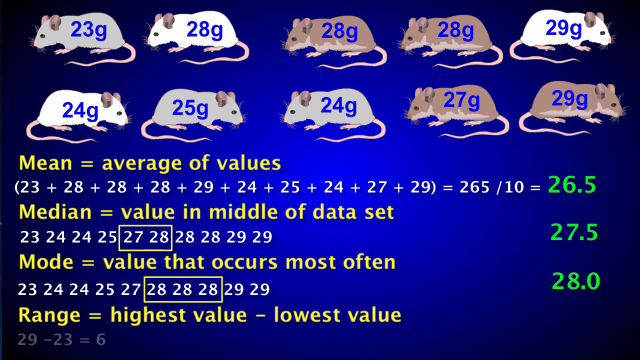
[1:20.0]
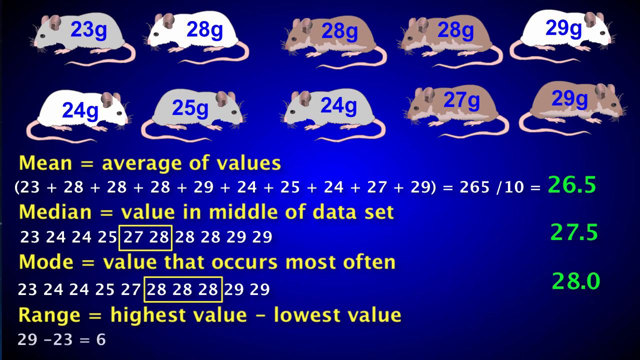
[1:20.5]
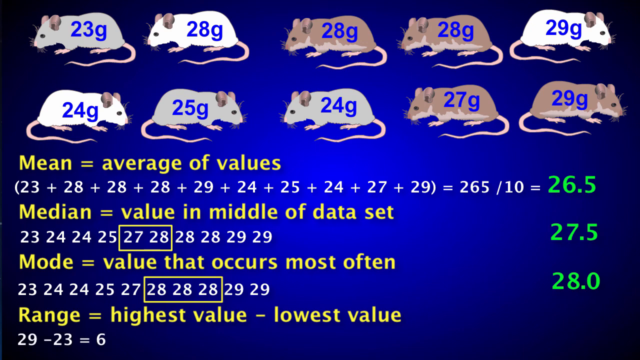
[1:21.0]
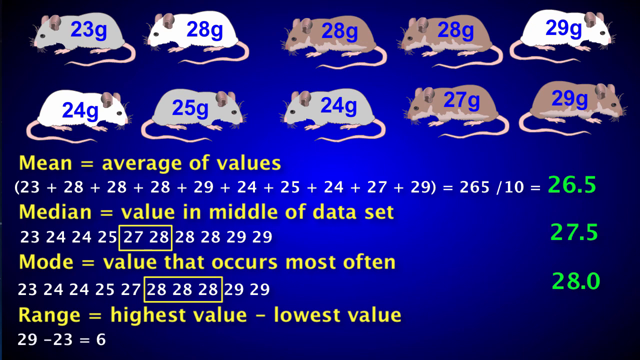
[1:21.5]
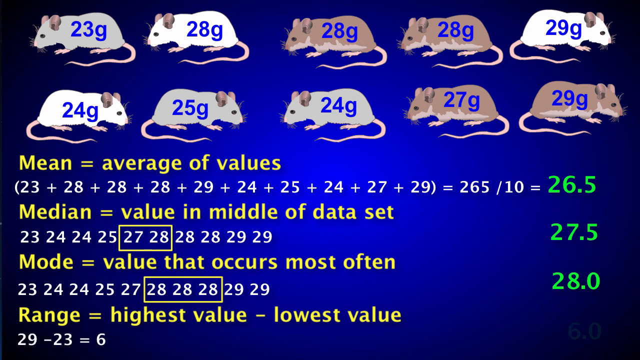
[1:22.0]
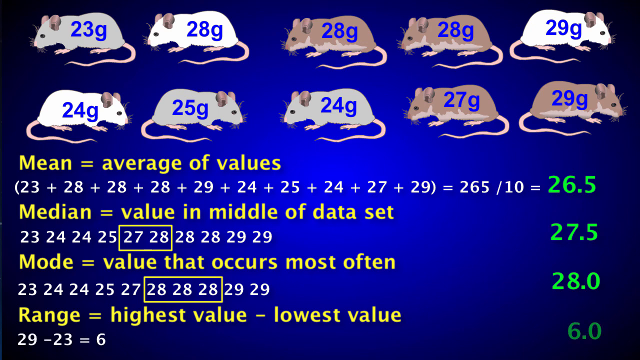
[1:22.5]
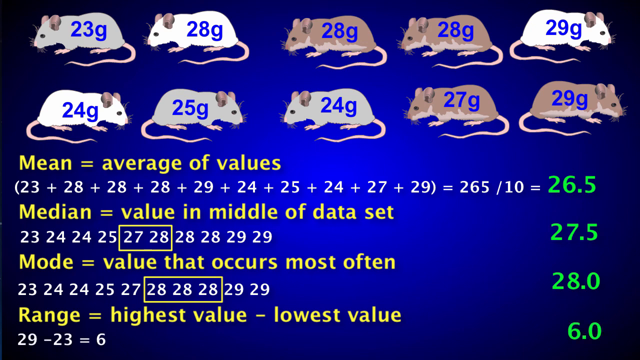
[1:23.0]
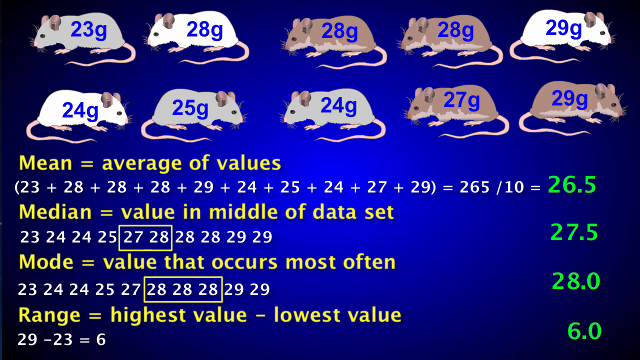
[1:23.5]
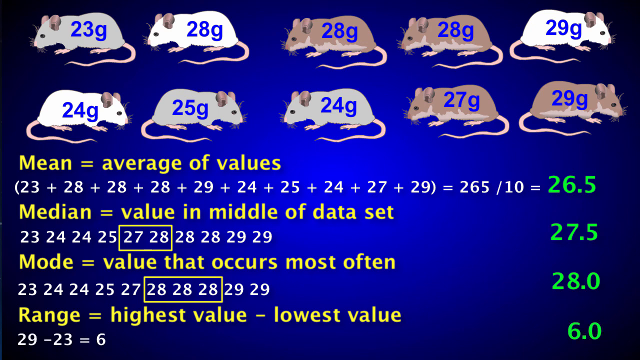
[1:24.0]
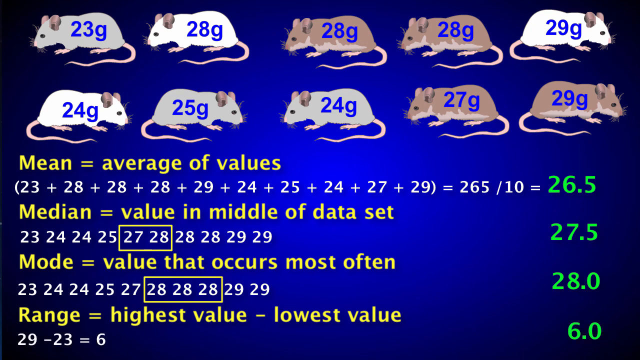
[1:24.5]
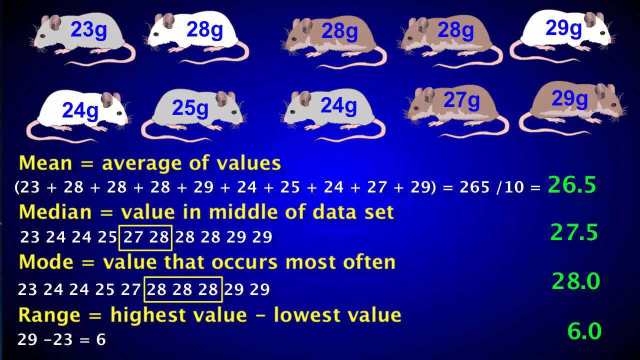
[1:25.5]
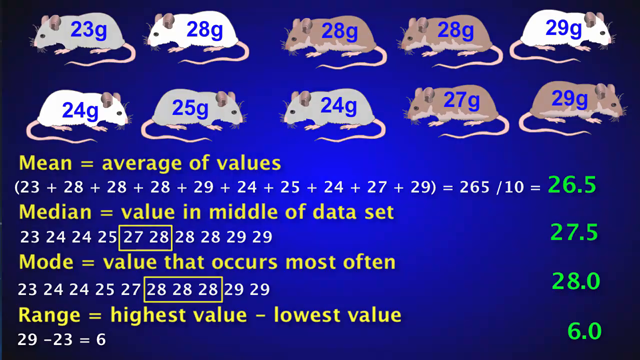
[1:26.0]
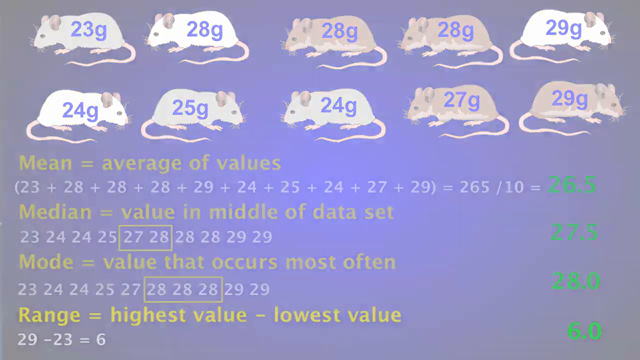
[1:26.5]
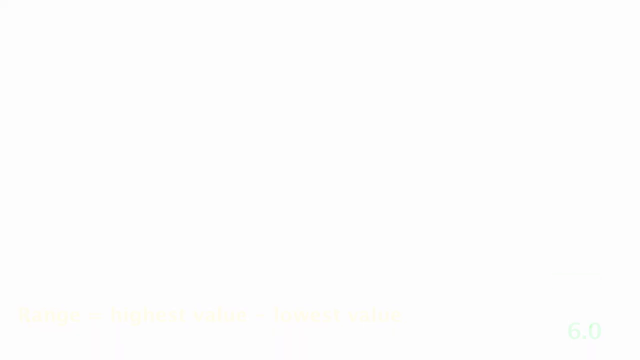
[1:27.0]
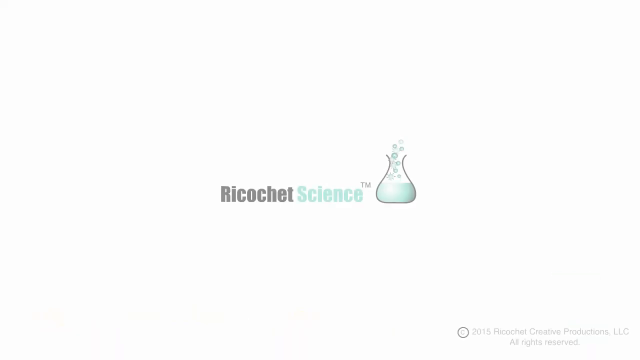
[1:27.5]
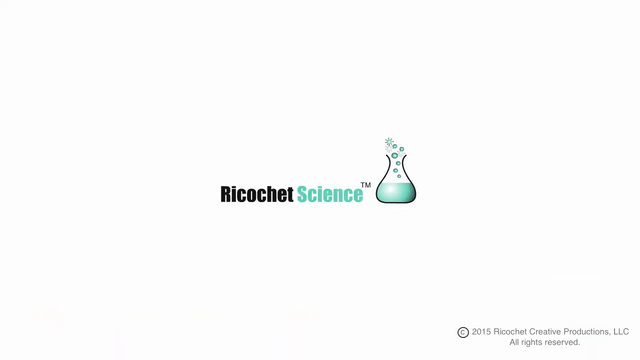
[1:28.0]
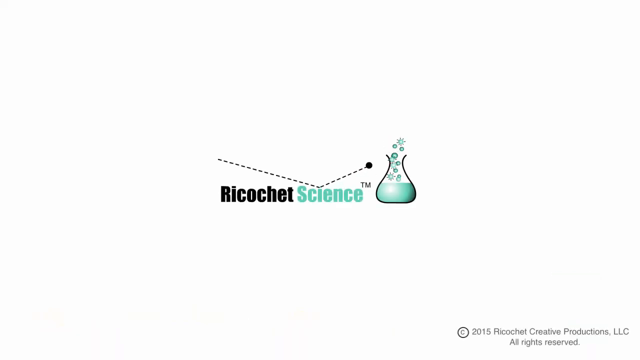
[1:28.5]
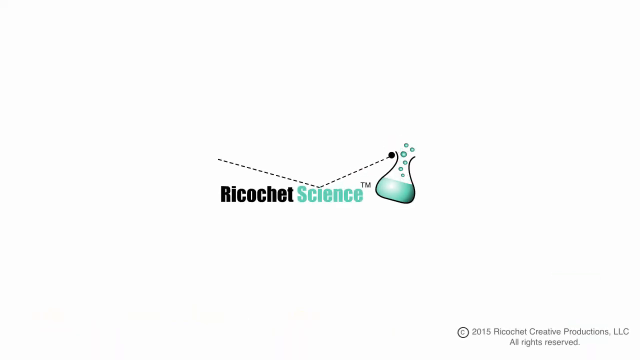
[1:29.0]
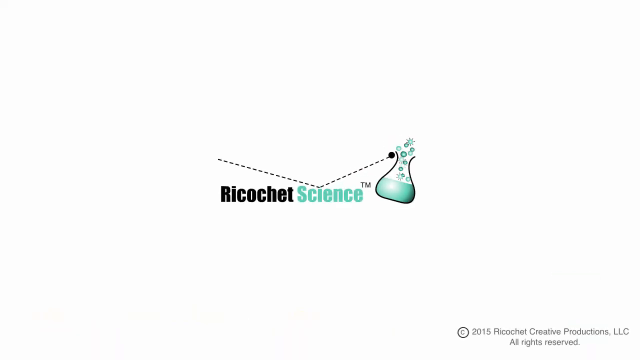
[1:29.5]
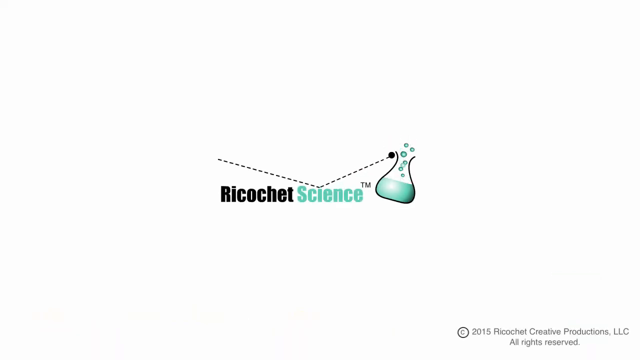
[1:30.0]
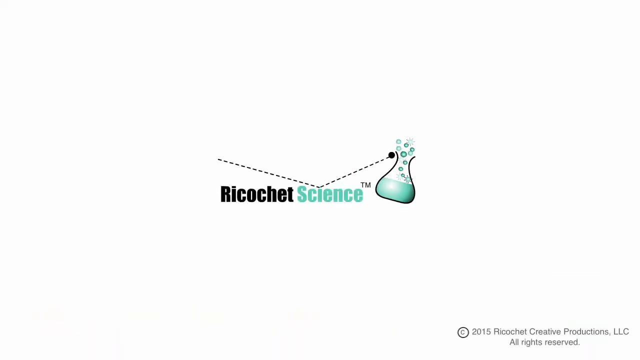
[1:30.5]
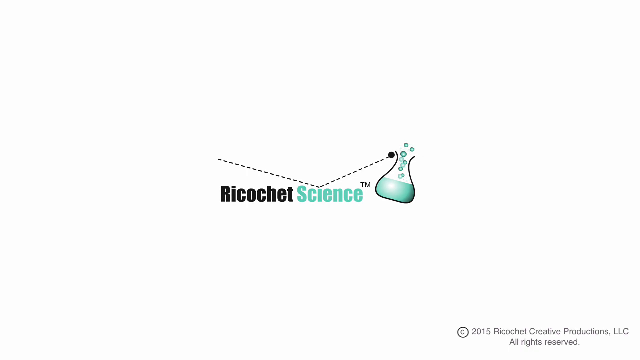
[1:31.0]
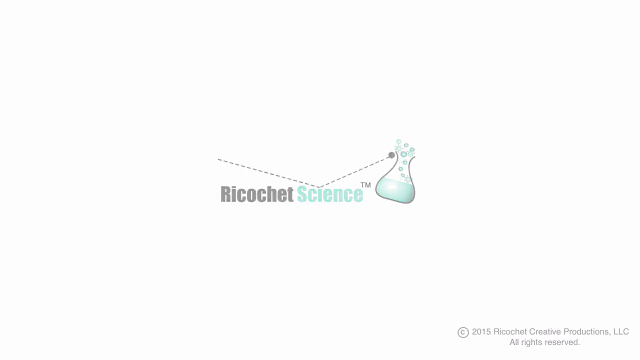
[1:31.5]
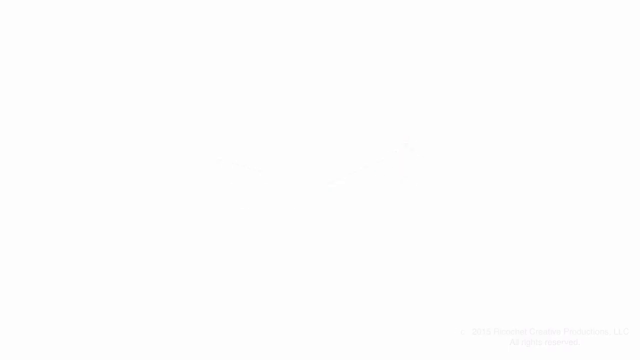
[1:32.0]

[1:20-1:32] A blue screen shows mice at the top with different gram values. The top row has five mice with 23, 28, 28, 28 and 29 grams, and the second row has 24, 25, 24, 27 and 29 grams. Definitions follow: the mean, the average of values, is 26½; the median, the value in the middle of the data set, is 27½ because 27 and 28 are the middle numbers; the mode, the value that occurs most often, is 28 grams since three mice have that number; and the range, the highest value minus the lowest value, is 29 minus 23, giving 6. The video ends with the Ricochet Science logo, with the words spaced together, "Ricochet" in black and "Science" in a green teal color. Next to it is a green beaker with atoms coming out of it after a black dotted line with a ball at its end ricochets into and hits the beaker.